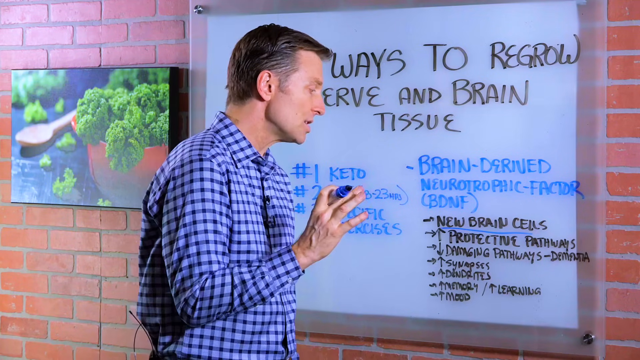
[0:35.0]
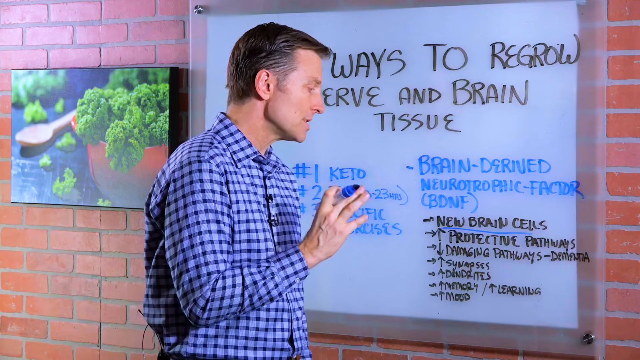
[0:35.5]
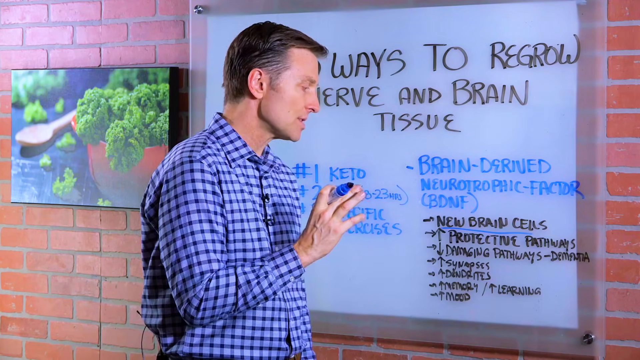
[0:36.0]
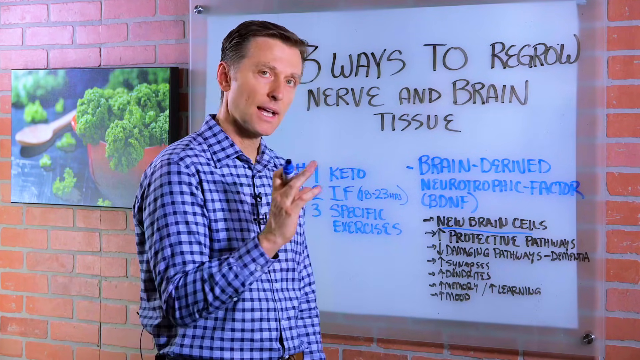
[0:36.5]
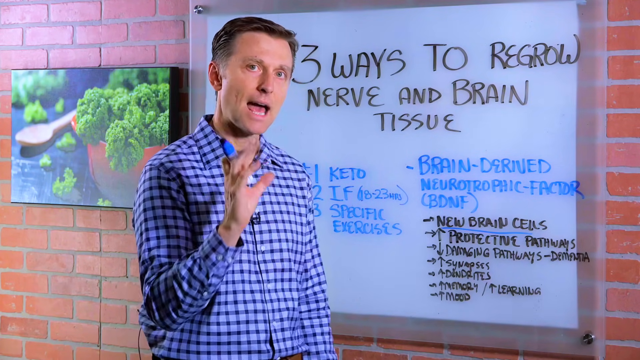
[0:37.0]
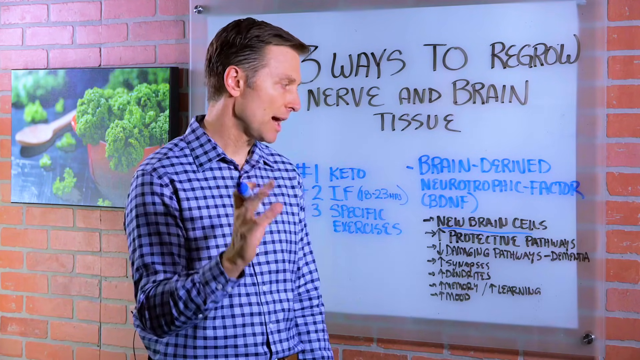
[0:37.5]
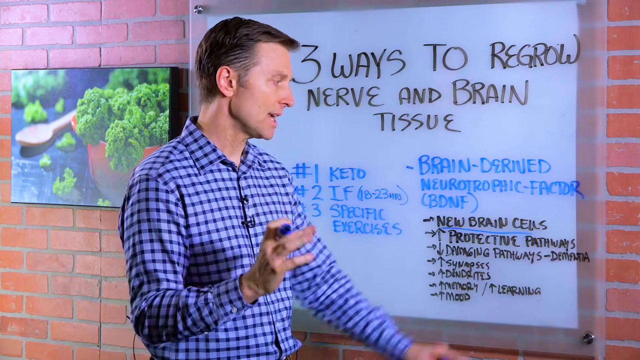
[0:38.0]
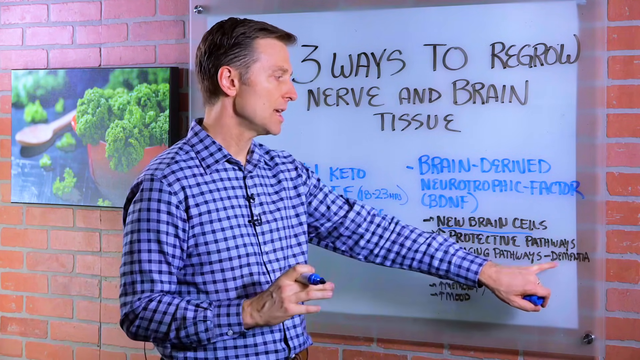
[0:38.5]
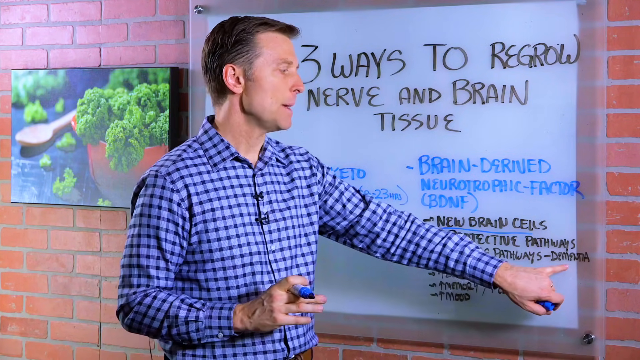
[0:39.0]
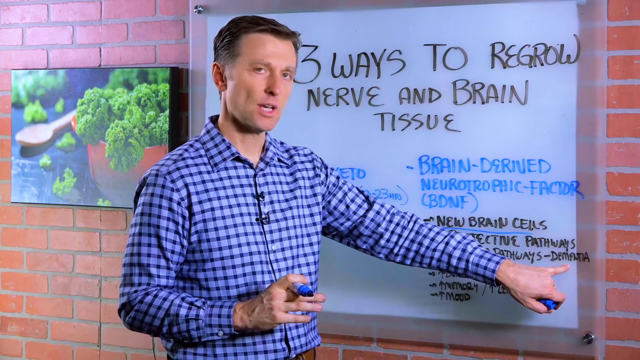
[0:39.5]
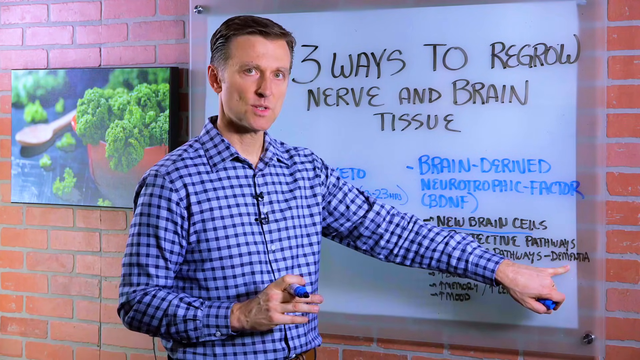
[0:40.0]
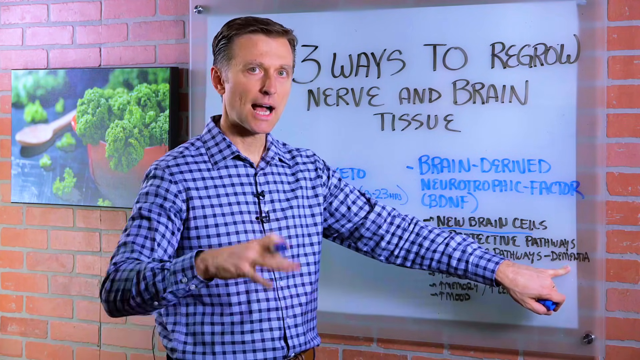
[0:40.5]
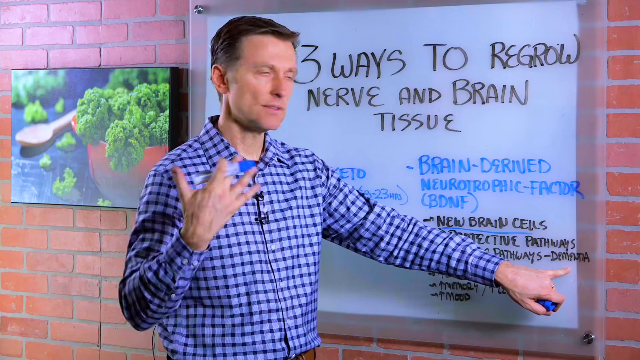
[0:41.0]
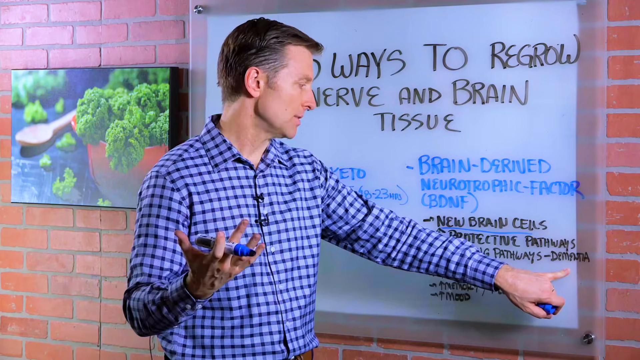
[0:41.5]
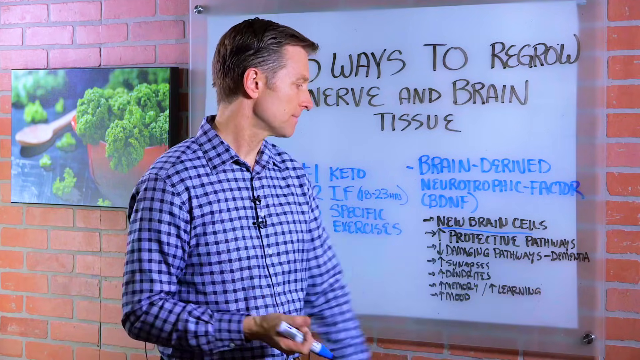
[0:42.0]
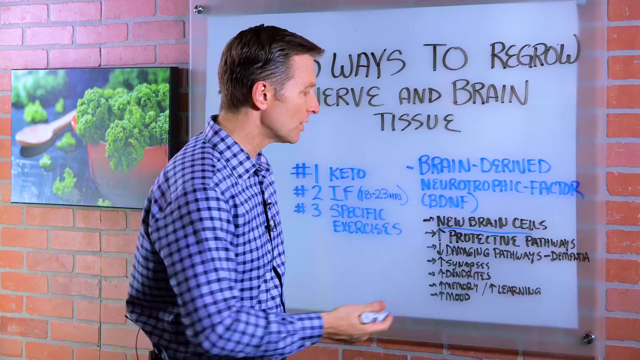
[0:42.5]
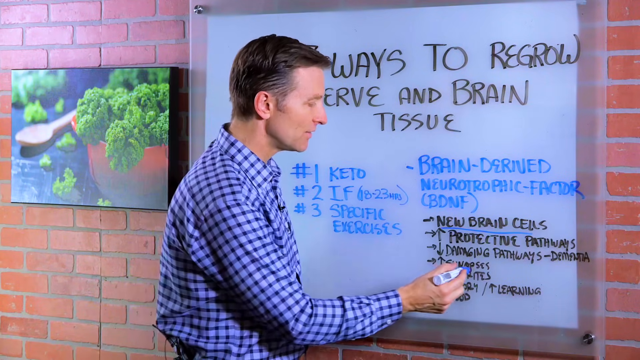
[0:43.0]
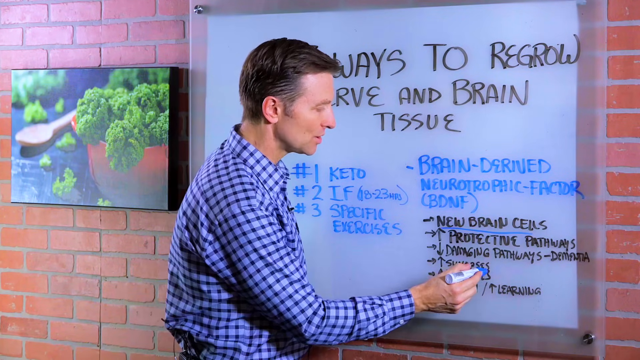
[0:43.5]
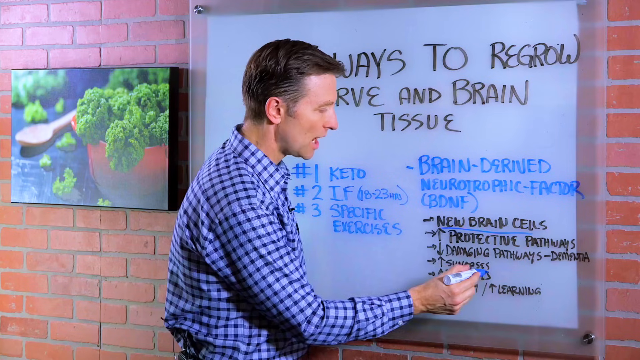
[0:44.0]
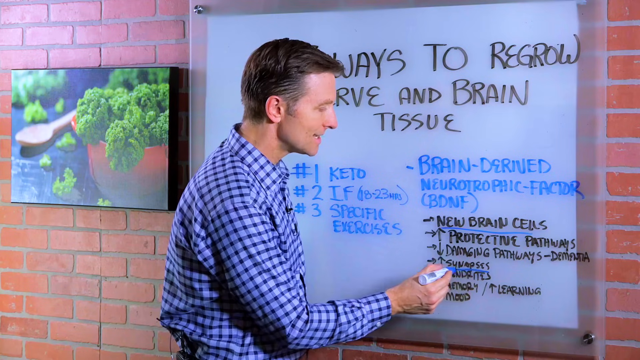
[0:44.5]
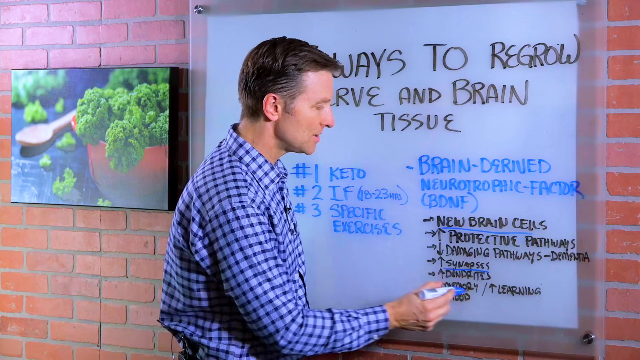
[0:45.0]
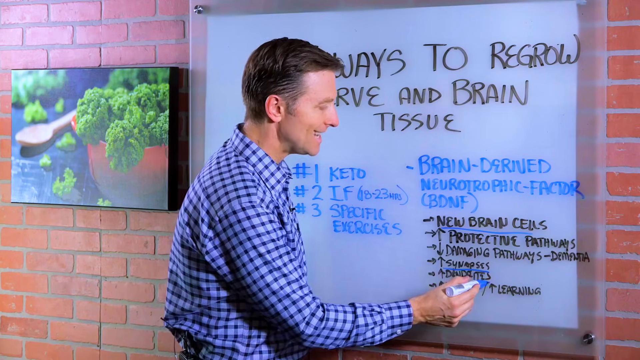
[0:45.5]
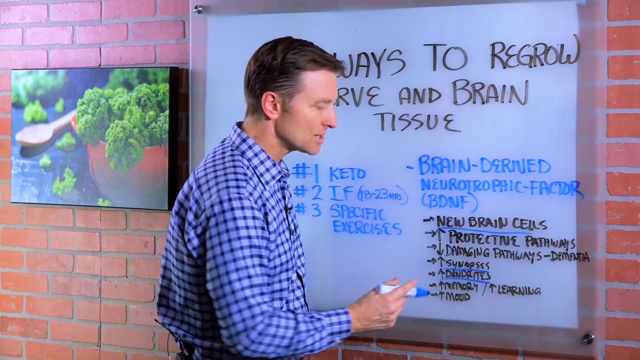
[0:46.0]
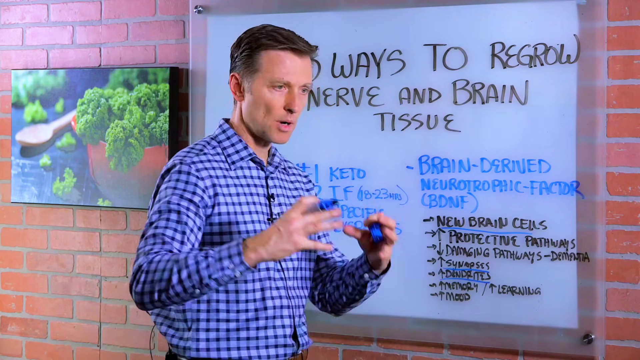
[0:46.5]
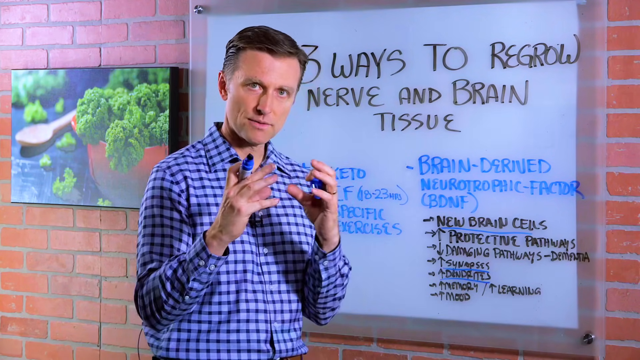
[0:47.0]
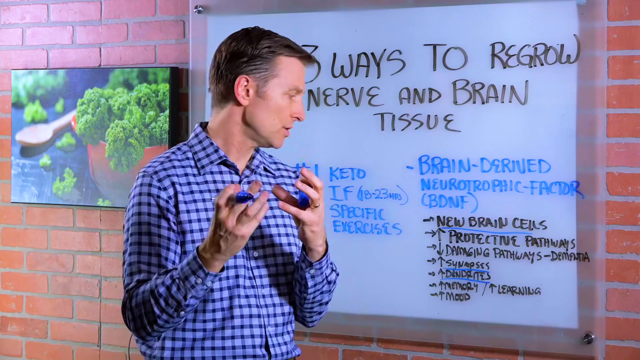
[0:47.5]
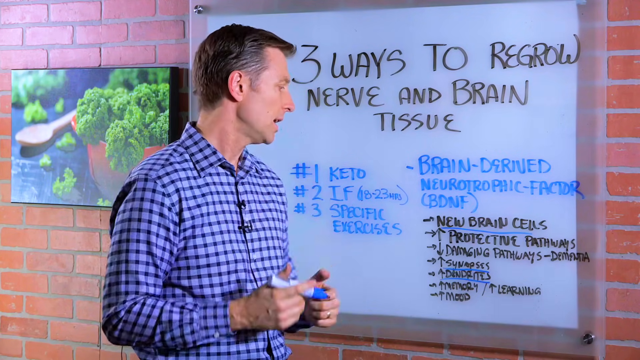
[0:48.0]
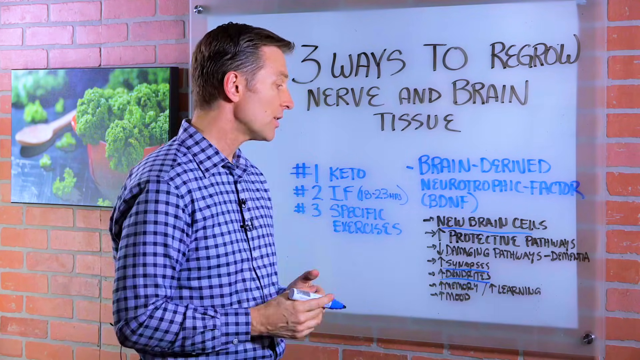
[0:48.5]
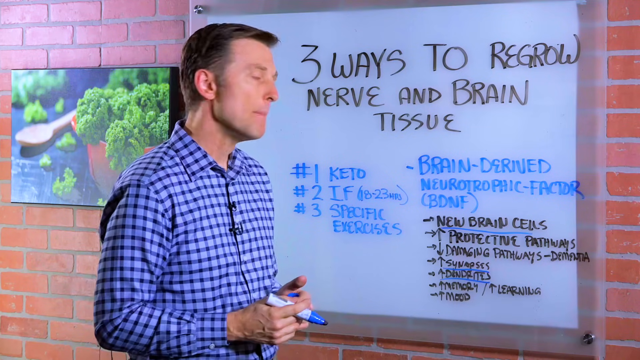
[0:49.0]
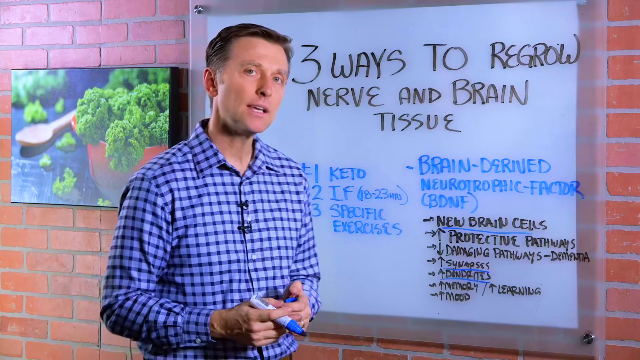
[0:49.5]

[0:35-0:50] A man holding a blue marker talks to the camera while pointing at a whiteboard that reads "three ways to regrow nerve and brain tissue." Beneath the title is a lot of writing in blue, red and black ink, and he appears to point at some of it as he talks. Some of the writing says "damaging pathways," other parts say "new brain cells" and "protective pathways," and one word apparently says "timed." On the left side the board says "keto," and it also says "specific exercises." He appears to be wearing a purple plaid shirt. The white board seems to be pinned to a brick wall, and to its left is a portrait of a vegetable, probably broccoli or another green vegetable.